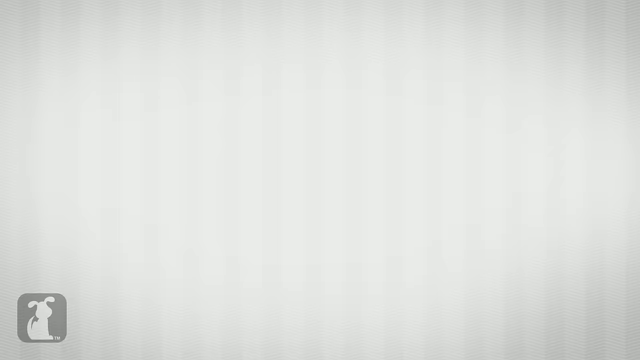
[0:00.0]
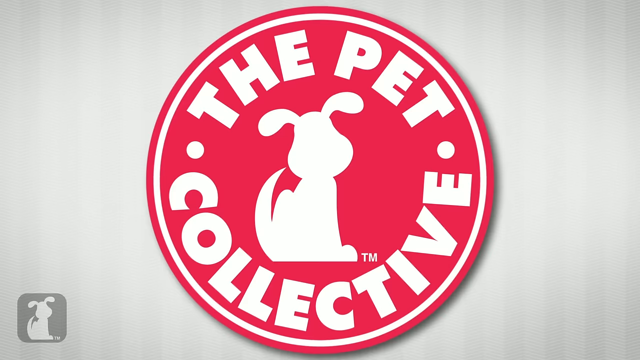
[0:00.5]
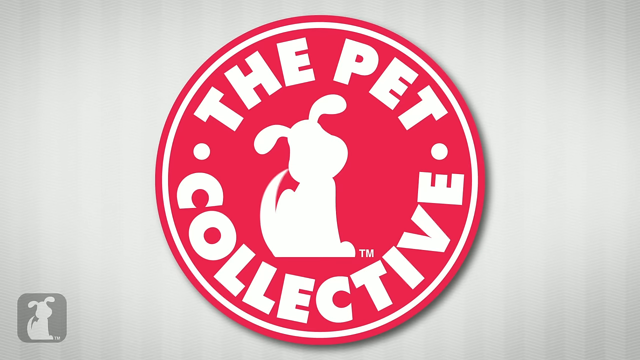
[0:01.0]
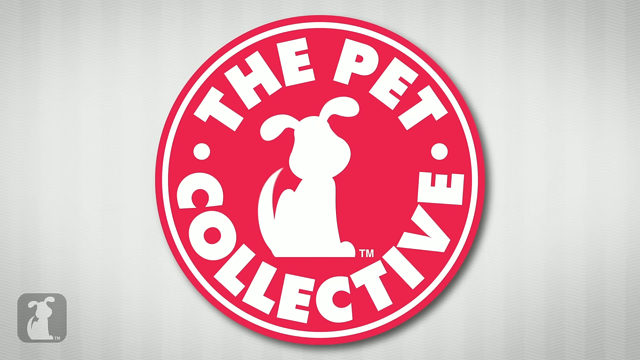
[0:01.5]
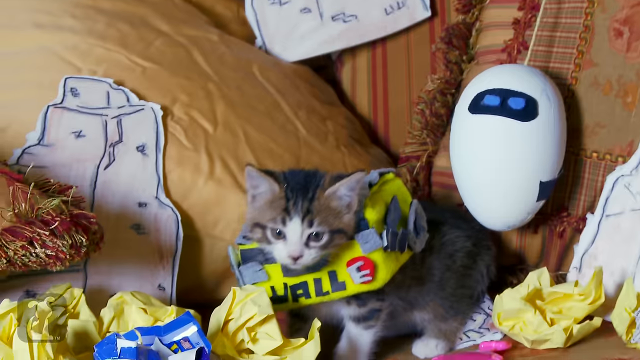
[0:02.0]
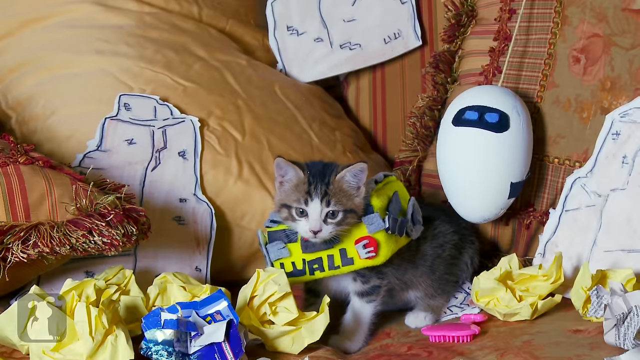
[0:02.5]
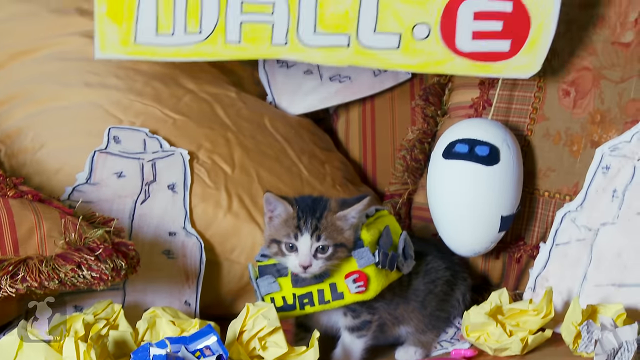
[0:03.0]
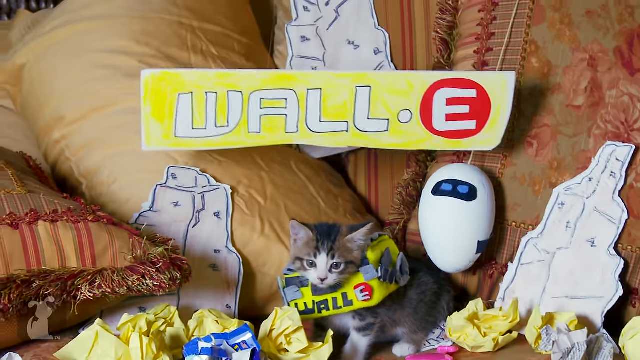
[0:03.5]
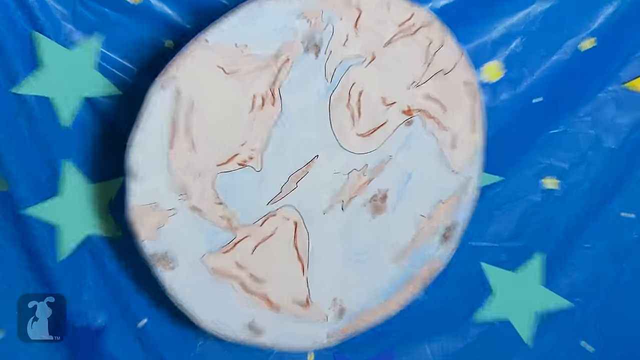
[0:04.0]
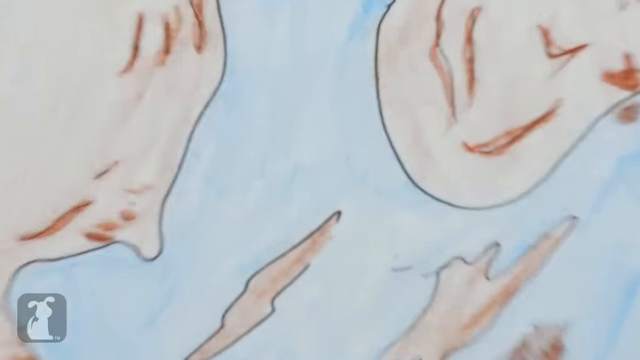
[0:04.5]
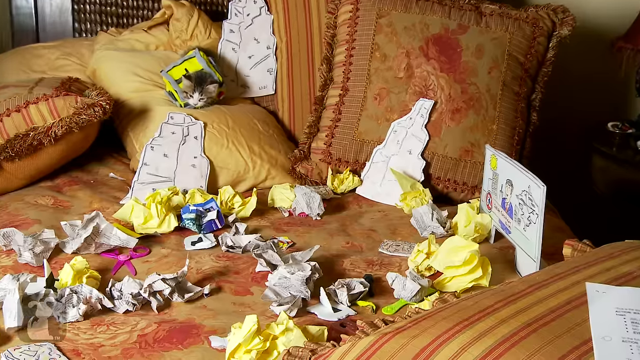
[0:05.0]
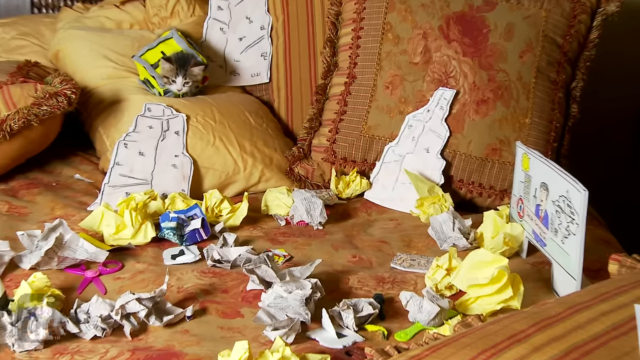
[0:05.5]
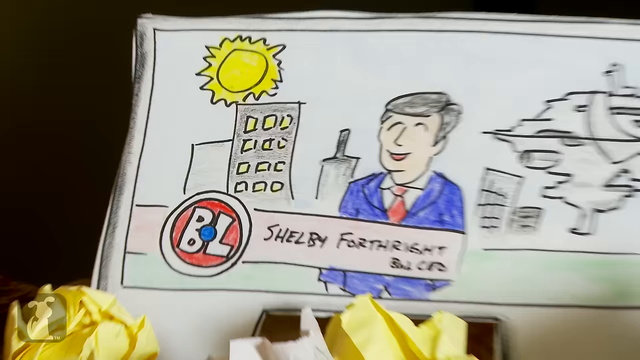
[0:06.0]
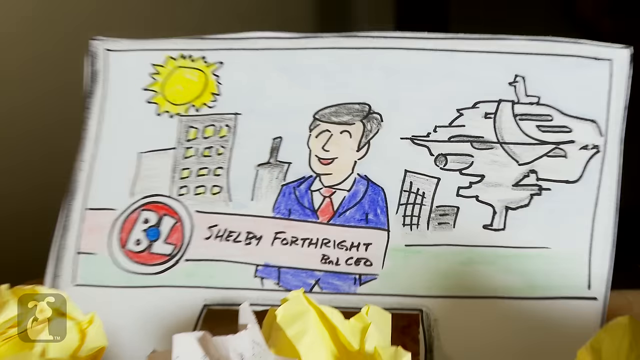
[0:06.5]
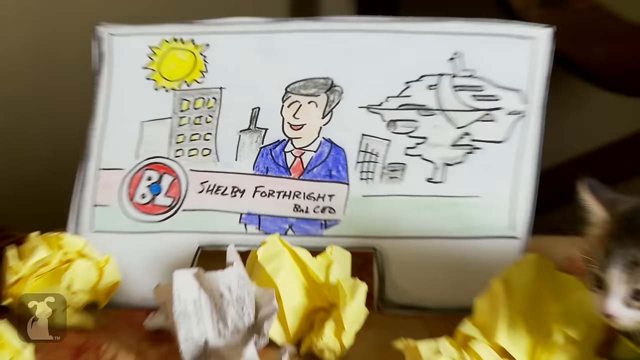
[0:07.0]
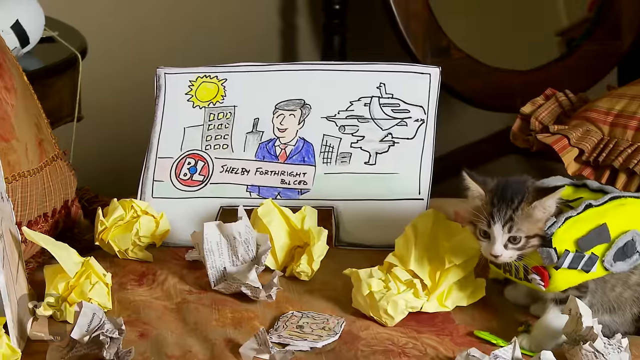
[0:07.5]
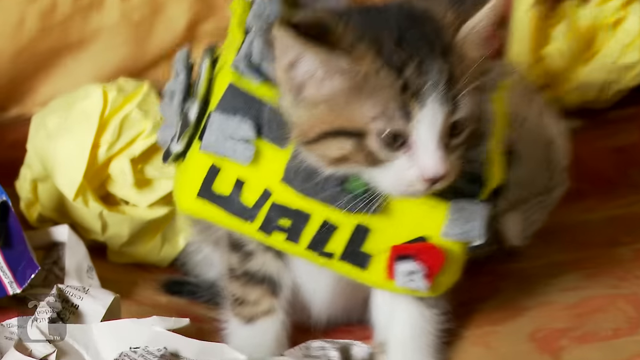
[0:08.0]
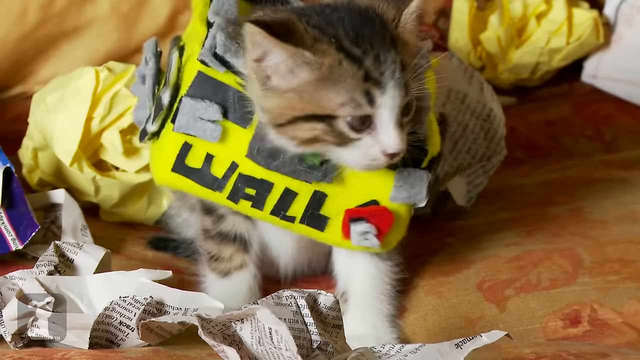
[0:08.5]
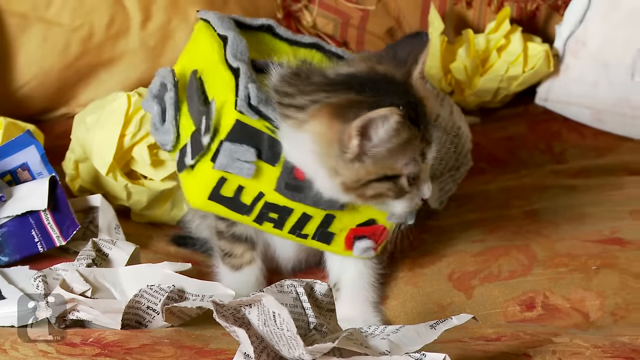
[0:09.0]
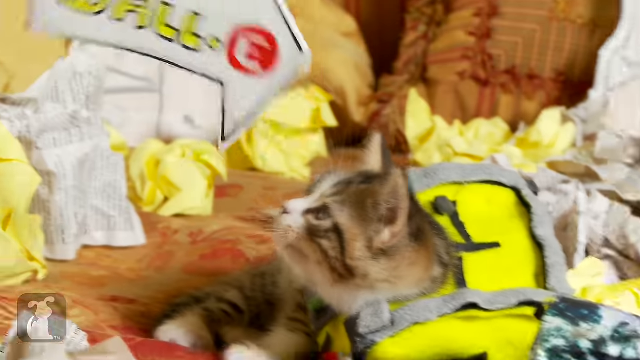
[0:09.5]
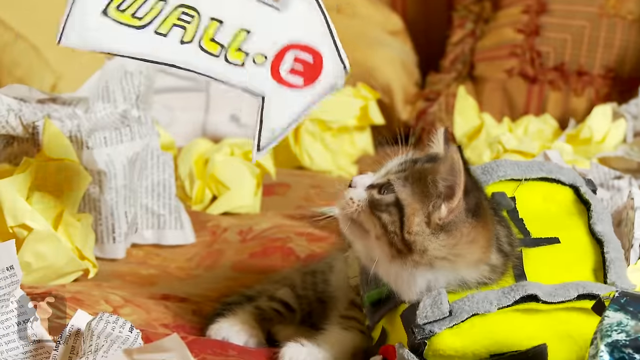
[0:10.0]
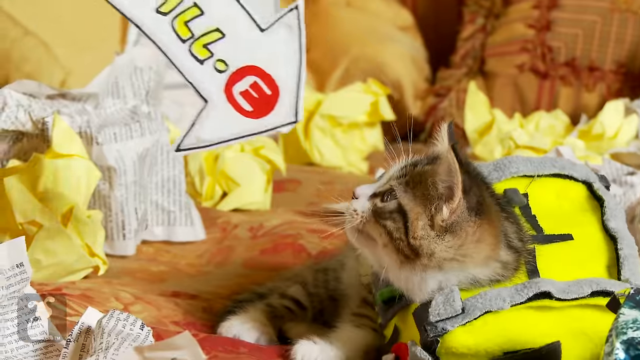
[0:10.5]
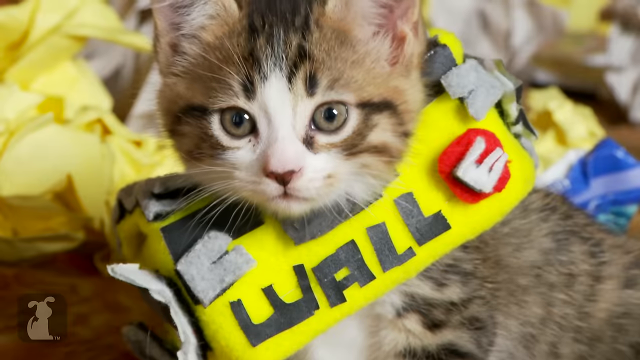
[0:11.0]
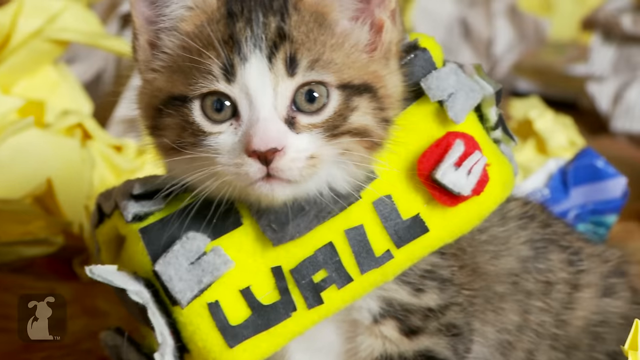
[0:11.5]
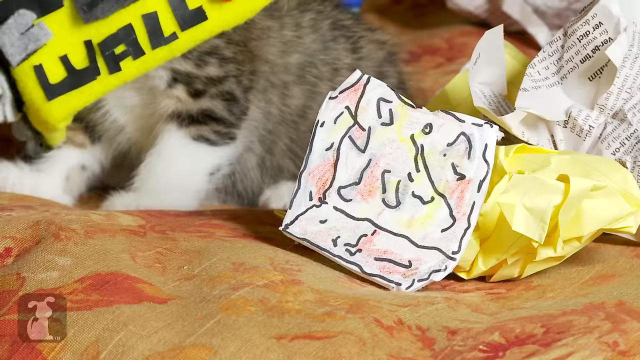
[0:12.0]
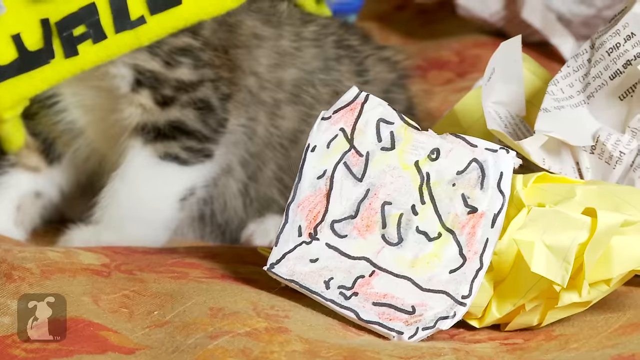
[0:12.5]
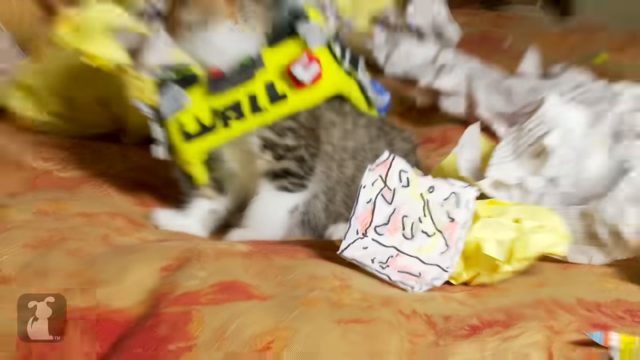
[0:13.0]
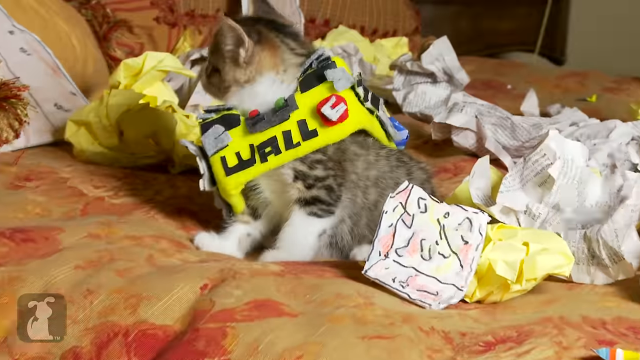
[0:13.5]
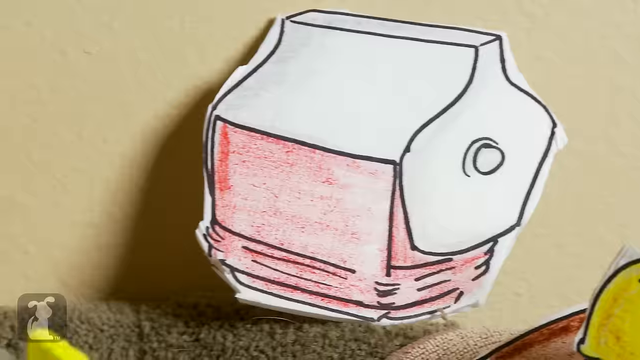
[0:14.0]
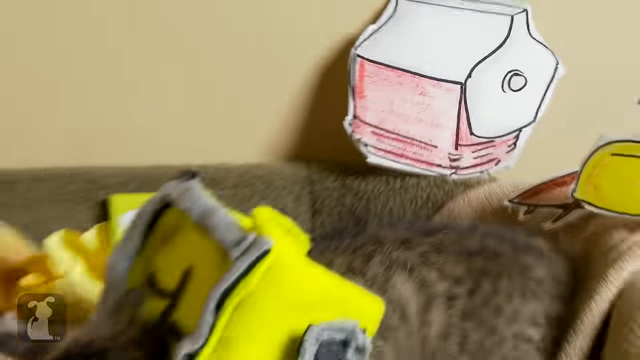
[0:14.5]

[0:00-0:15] The video opens with an insignia, followed by a cat. It is cut into many different sections of what seems to be the cat walking around, and the cat looks like a young, almost baby cat. Around it is a squarish object that says "WALL-E"; the object is mostly yellow, the letters "WALL" are black, and the E is in a red circle with white lettering. The cat walks around in what is presumably an almost city-like setting. An arrow comes in from the top left and points at the cat, and the arrows also say "WALL-E". The video then cuts to what seems to be a person speaking, shown as a drawing, along with a drawing of a moon.